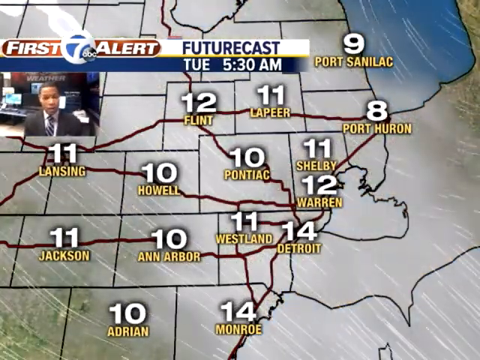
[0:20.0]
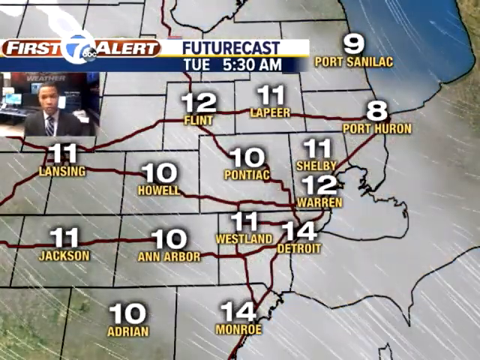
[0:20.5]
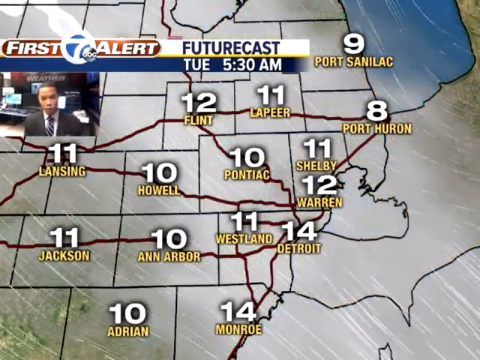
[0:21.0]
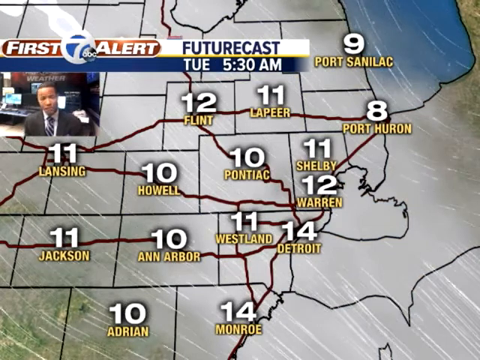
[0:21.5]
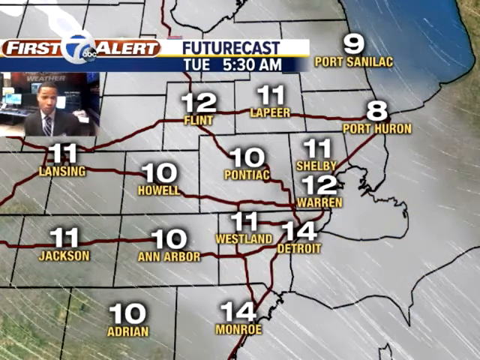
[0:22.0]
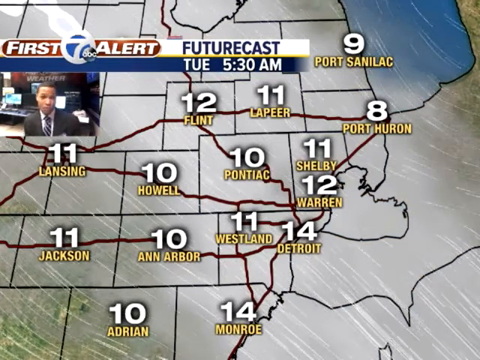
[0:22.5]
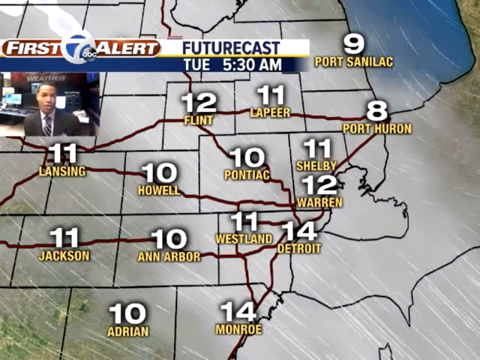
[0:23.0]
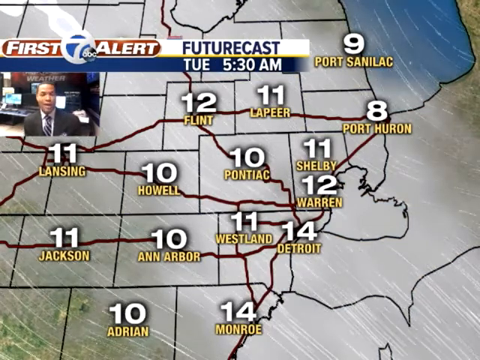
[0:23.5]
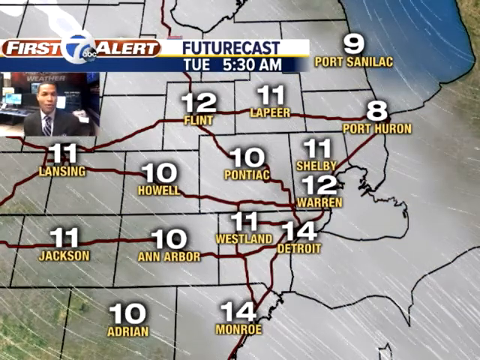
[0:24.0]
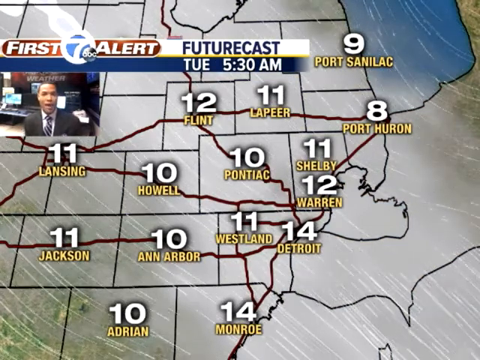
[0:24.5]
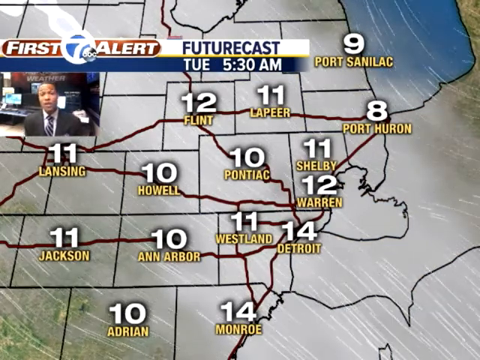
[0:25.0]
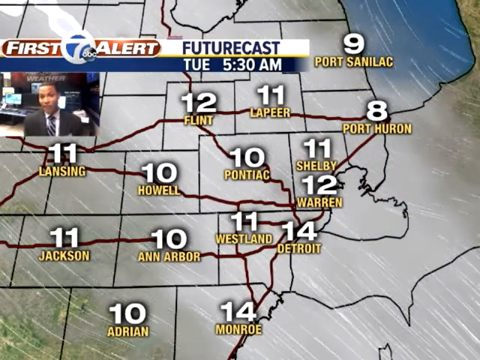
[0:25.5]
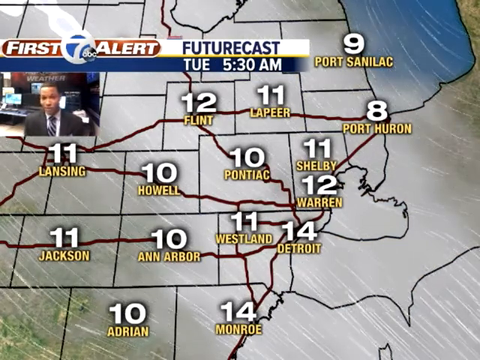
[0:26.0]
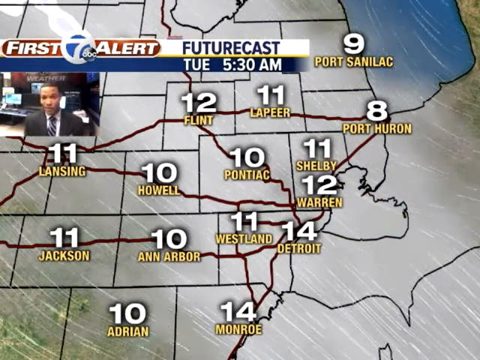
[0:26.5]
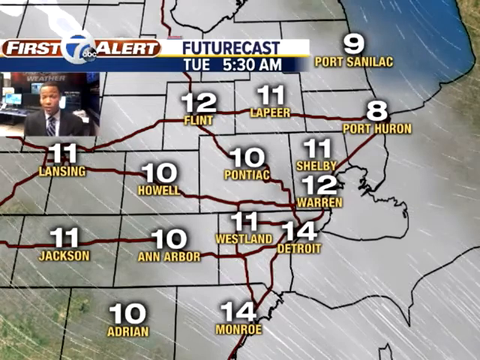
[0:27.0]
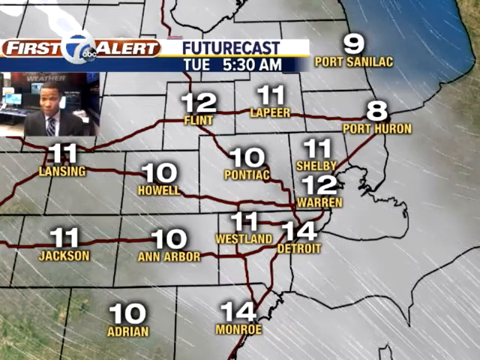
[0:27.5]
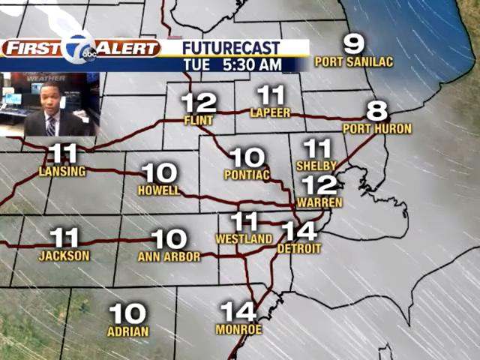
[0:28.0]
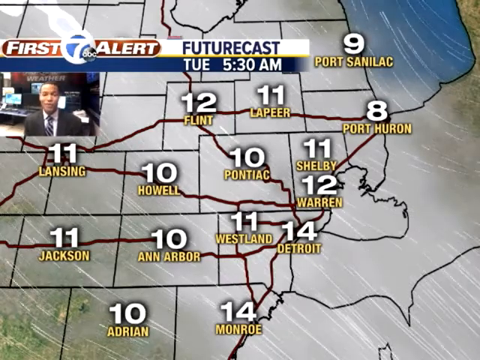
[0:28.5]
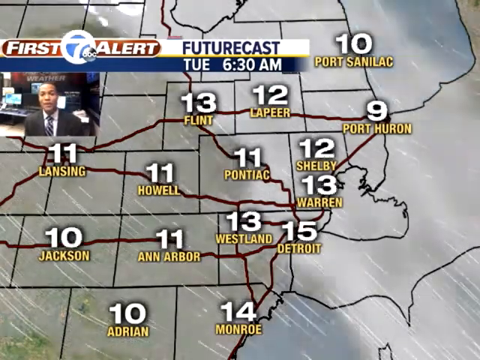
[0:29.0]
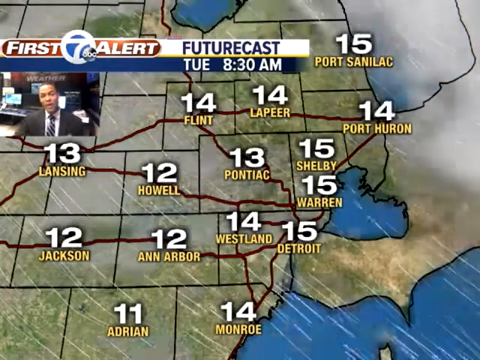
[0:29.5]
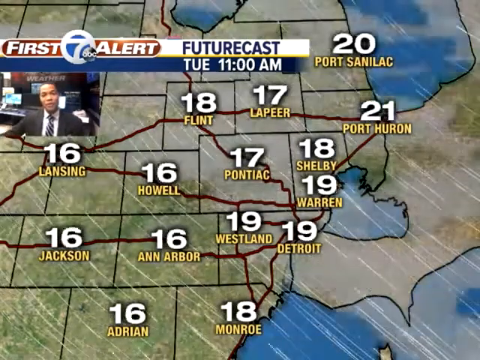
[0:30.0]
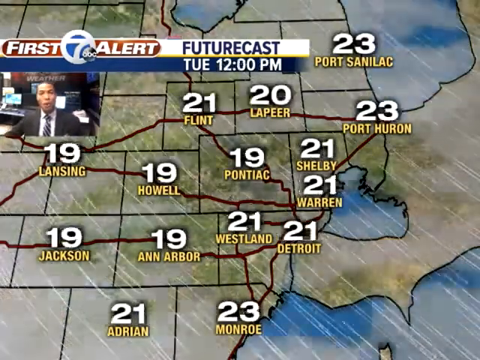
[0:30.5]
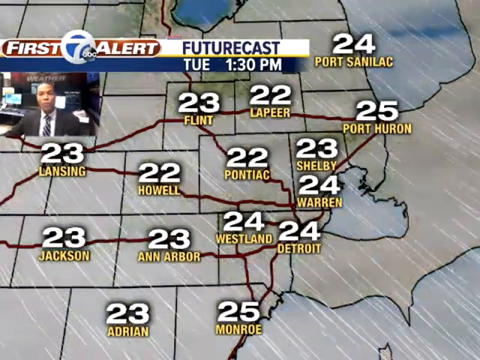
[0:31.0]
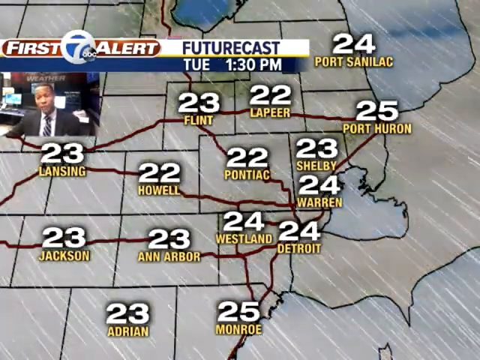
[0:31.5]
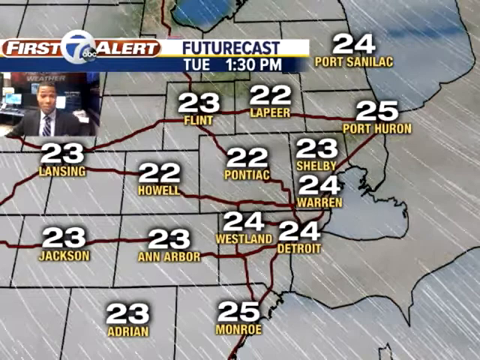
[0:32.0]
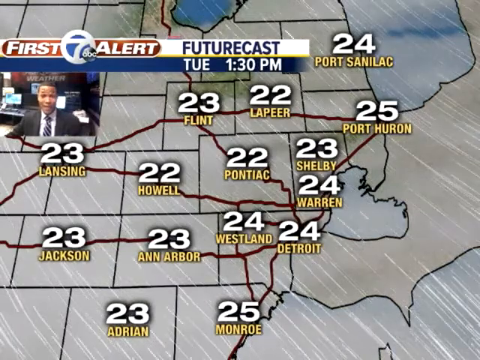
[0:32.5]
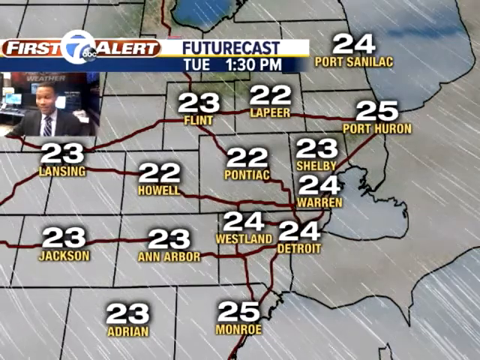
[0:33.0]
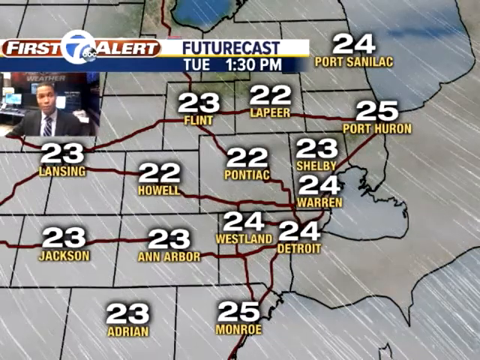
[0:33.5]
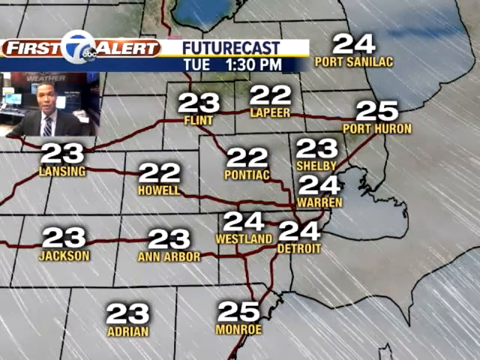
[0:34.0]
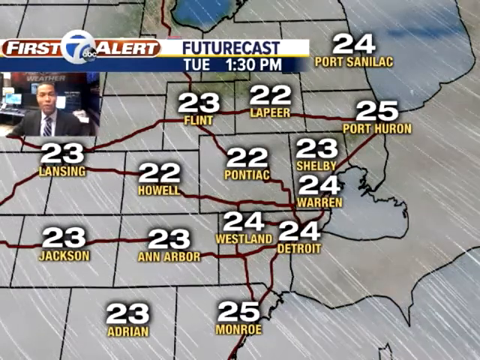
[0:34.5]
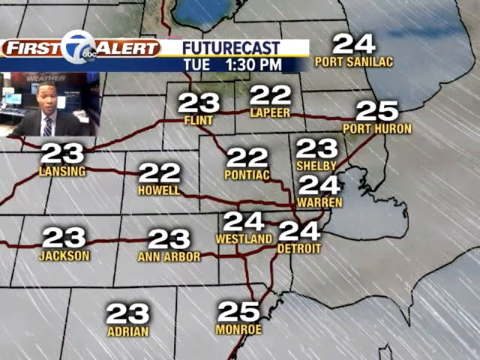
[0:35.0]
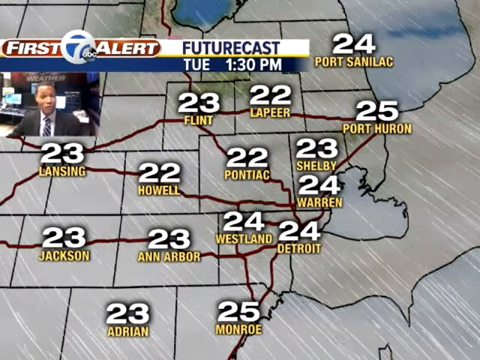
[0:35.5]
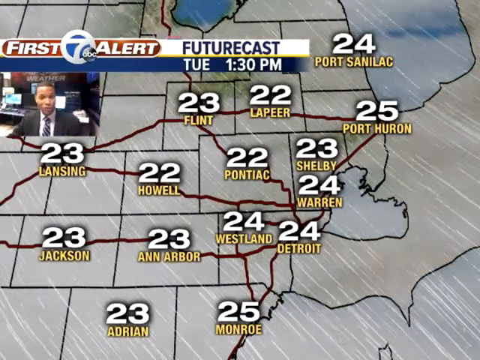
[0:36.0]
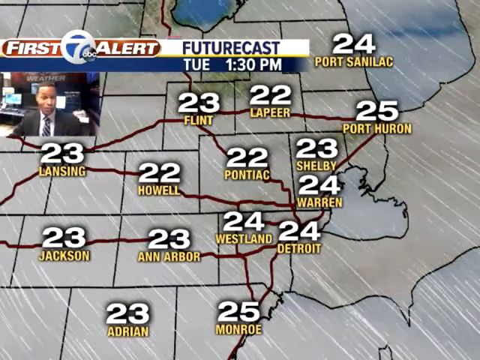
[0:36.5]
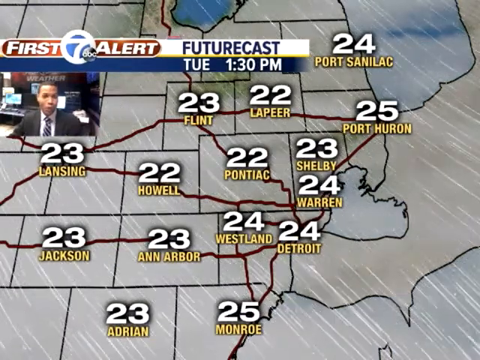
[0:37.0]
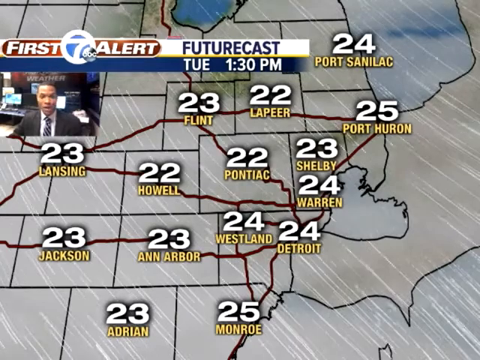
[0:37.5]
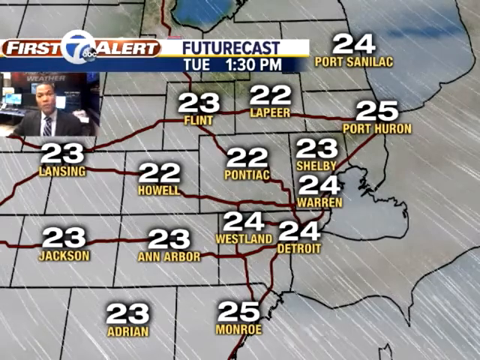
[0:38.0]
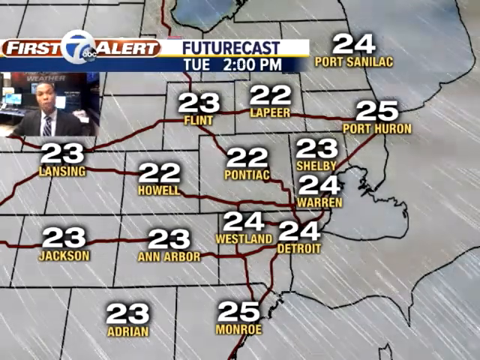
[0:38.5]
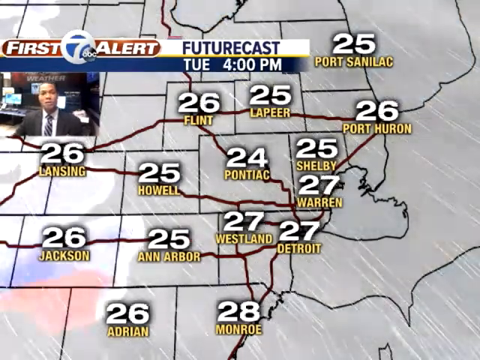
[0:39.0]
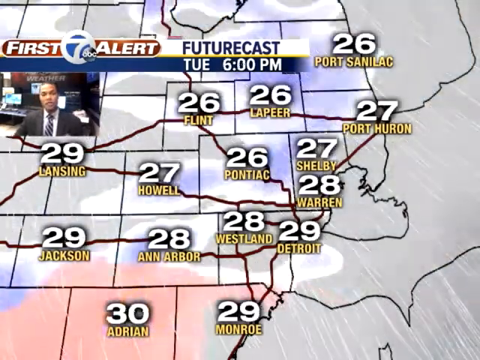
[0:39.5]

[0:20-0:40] A map of the weather forecast shows areas around Lansing, Oslo, Pontiac, Sarin and Shelby. For Tuesday around 5:30 am, most of the areas are cloudy, with temperatures ranging from 9 in Port Salinac to a high of 14 in Detroit, and wind blowing from the southeast toward the northwest. The forecast then moves forward to Tuesday at 12:30, when temperatures are higher, ranging from a high of 24 at Port Huron to a low of 20 at Howell, with the wind still blowing from the southeast. In the corner, a small video shows the presenter, a young Black man who is formally dressed, with many computers in the background.